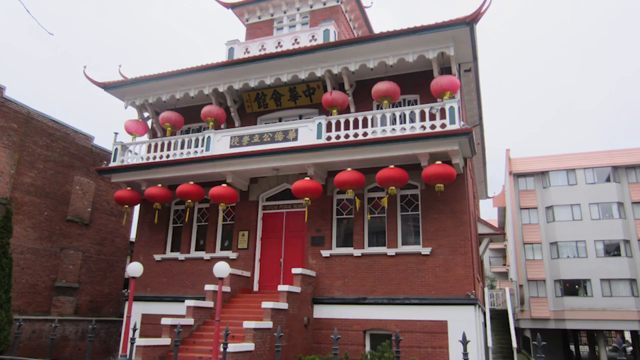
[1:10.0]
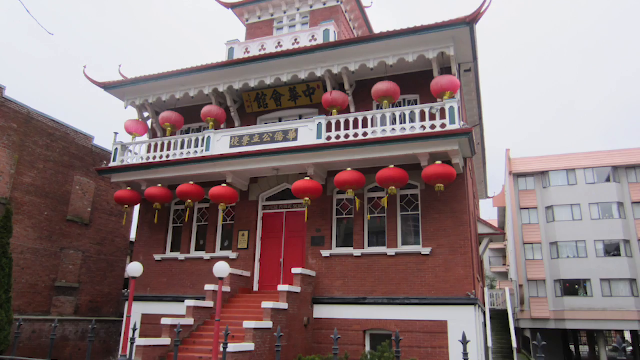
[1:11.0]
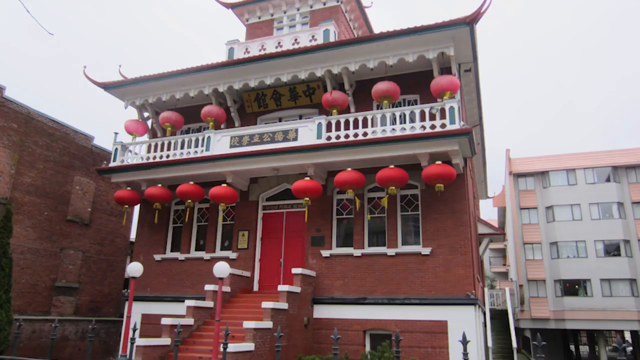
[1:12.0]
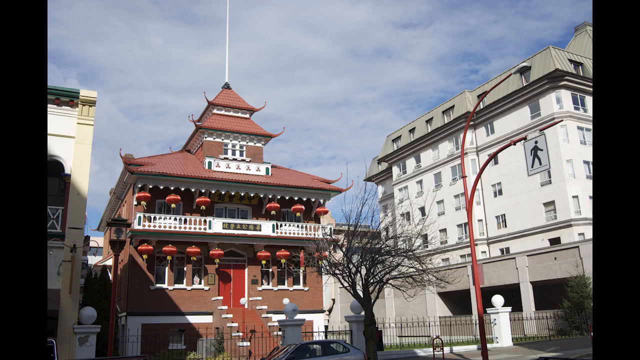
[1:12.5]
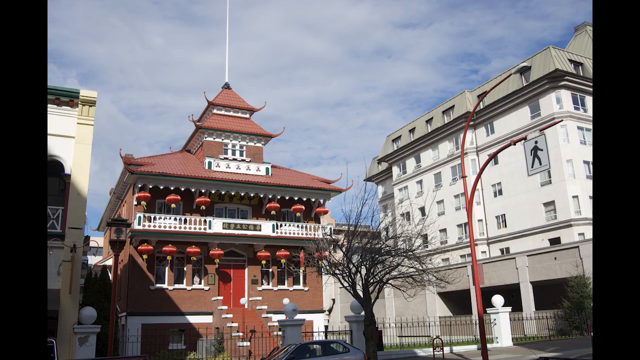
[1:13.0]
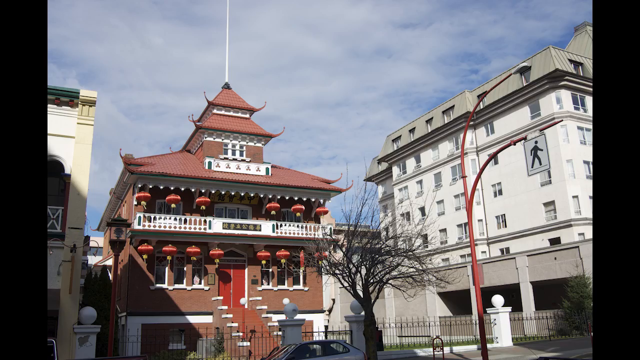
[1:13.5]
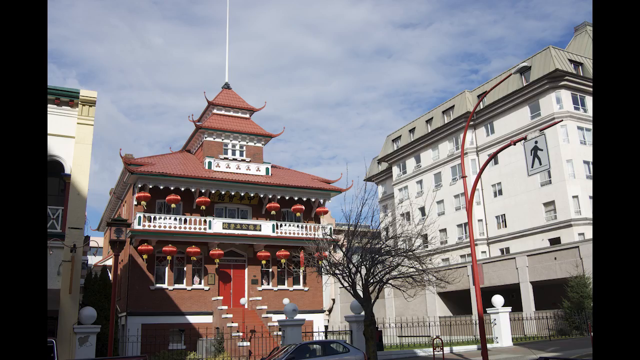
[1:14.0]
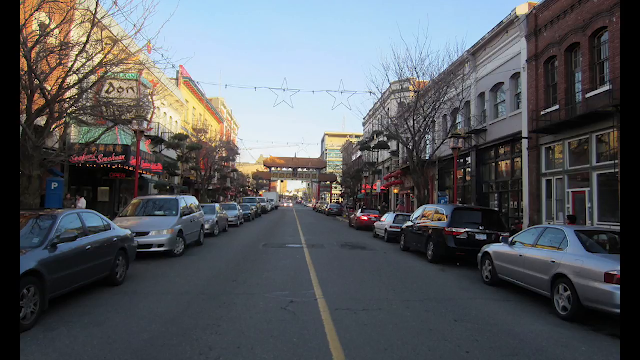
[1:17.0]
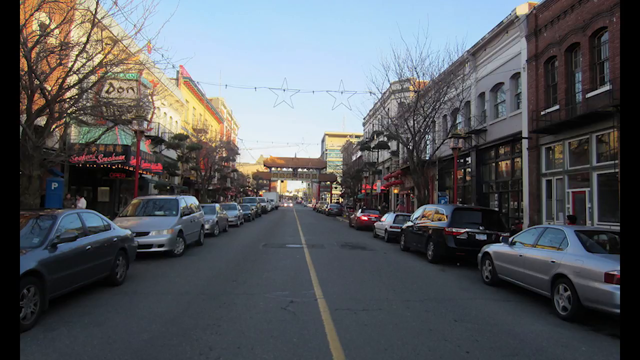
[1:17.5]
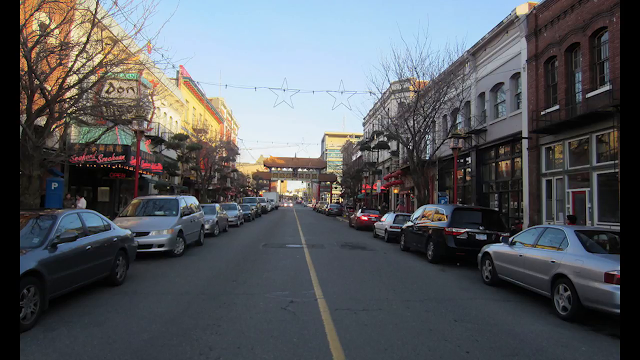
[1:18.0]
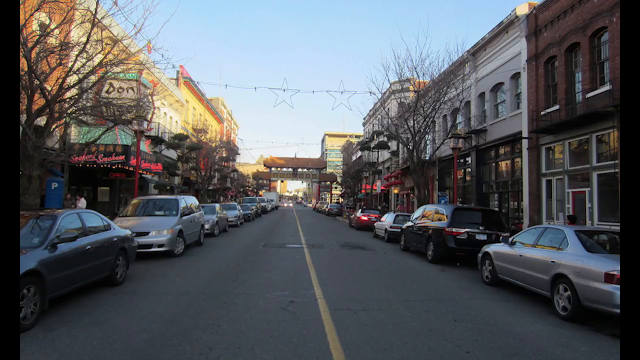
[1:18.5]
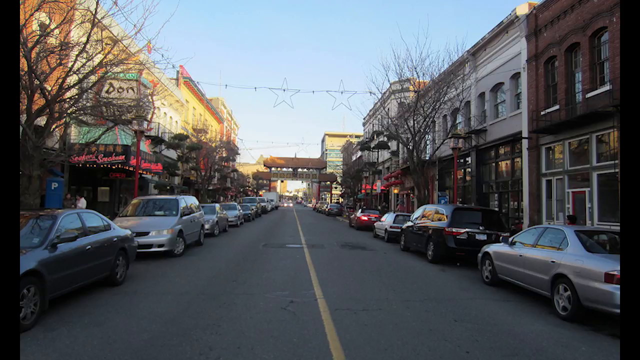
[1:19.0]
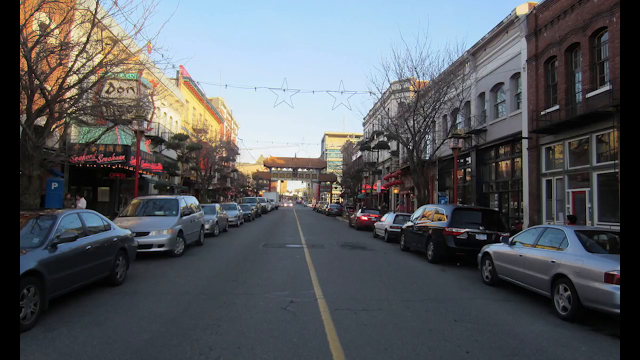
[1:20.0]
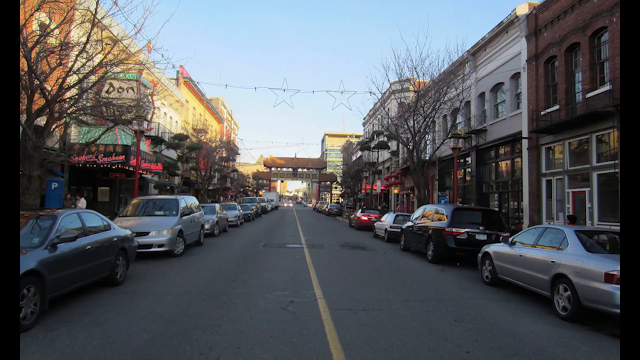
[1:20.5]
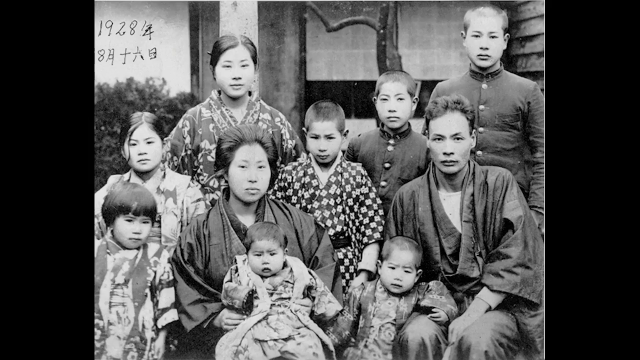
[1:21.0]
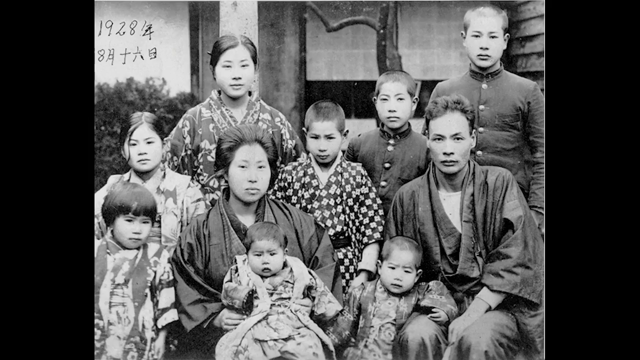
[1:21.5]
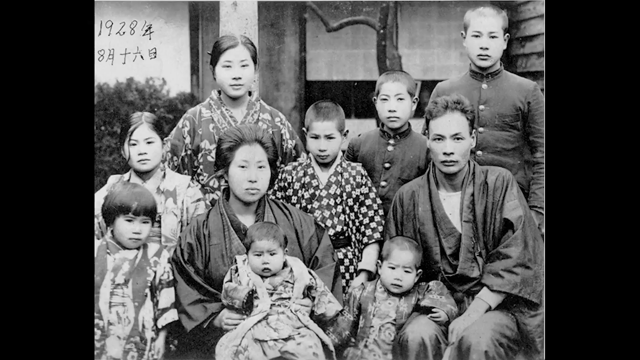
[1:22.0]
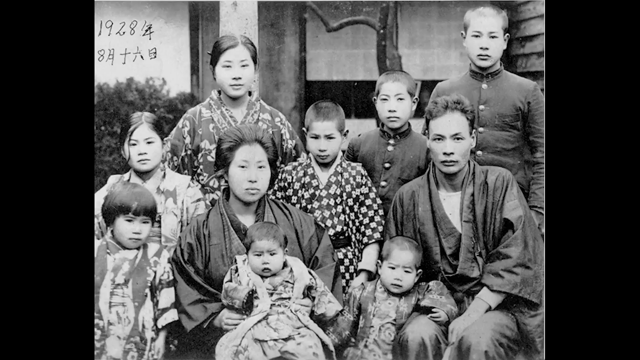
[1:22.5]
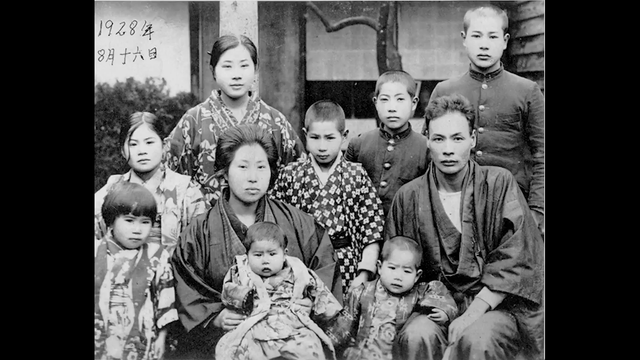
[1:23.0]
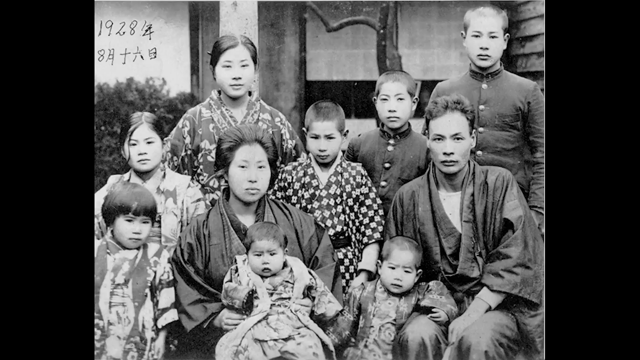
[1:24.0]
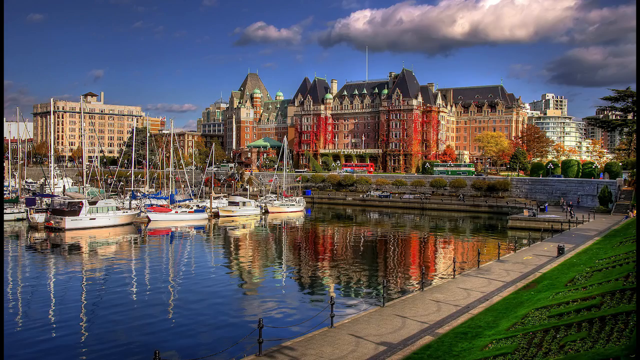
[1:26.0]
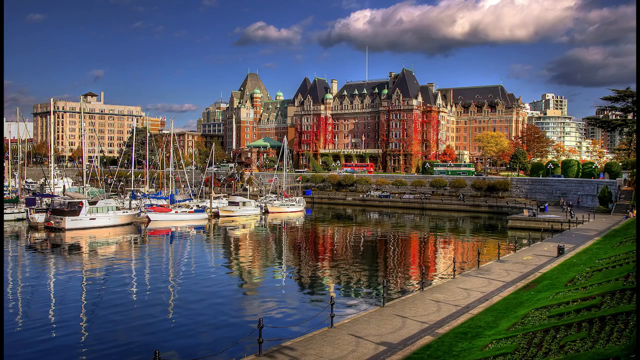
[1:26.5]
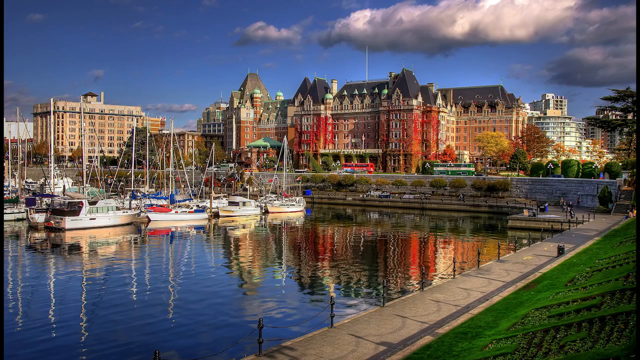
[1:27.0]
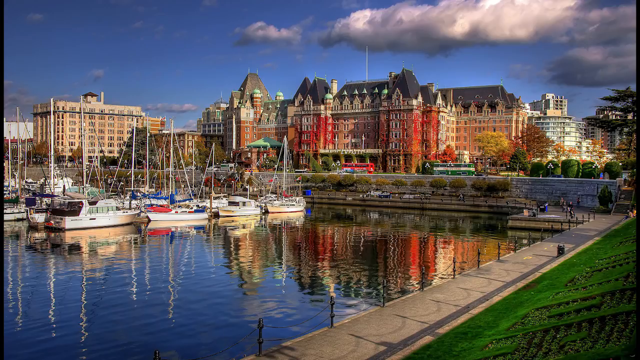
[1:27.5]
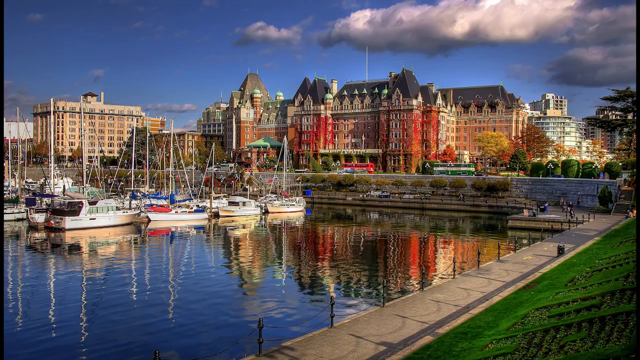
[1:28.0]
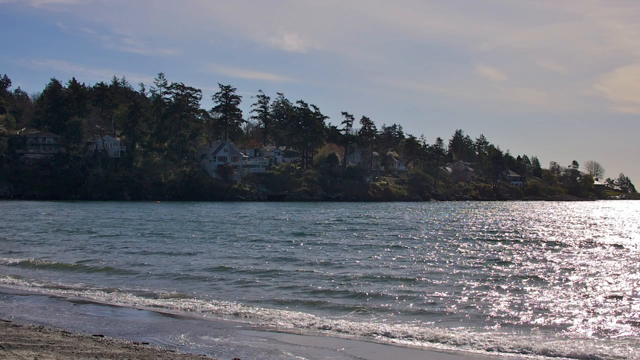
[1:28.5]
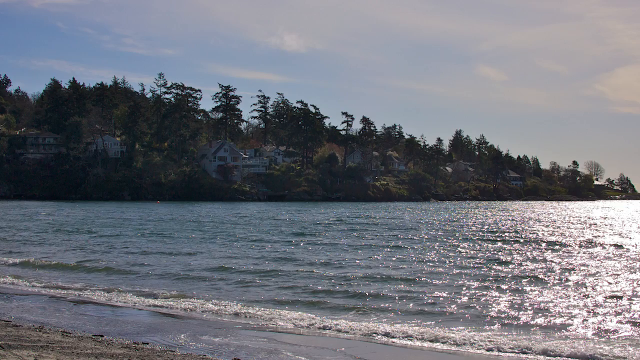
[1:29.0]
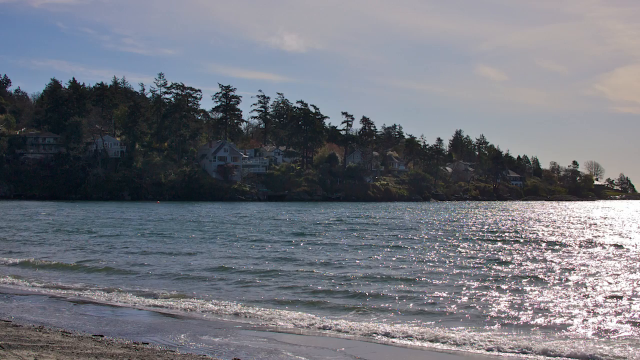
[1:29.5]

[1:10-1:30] A building seems to be made of brick or has brick-colored walls with white trim, and what look like lanterns hang from the ceiling of the balconies. Another angle of the same building shows the street, with cars parked on each side, some brown and gray buildings, and trees with little leaves on them. A black and white picture shows what looks like two adults and what seem to be children posing for a picture. Next is a harbor with some boats and some buildings in the background; one of the buildings has red walls and a black roof. Then a body of water appears, with trees and buildings in the background and a sky with patchy blue and white clouds.